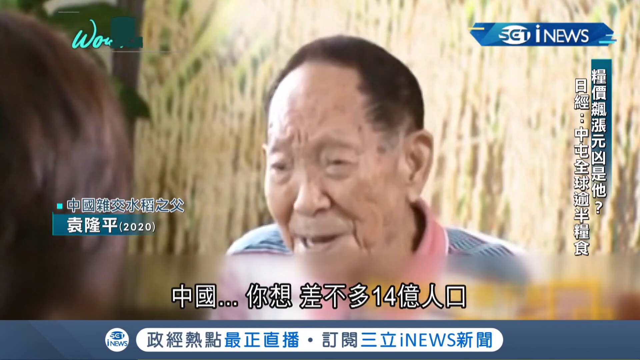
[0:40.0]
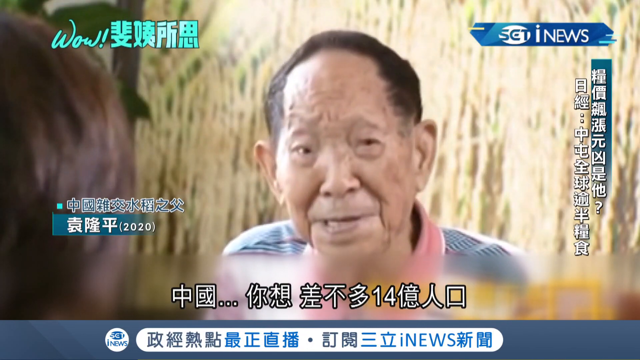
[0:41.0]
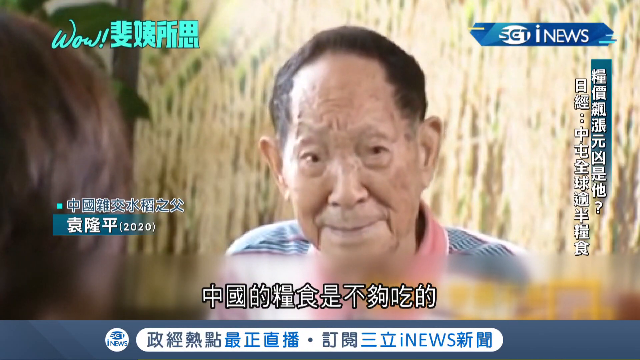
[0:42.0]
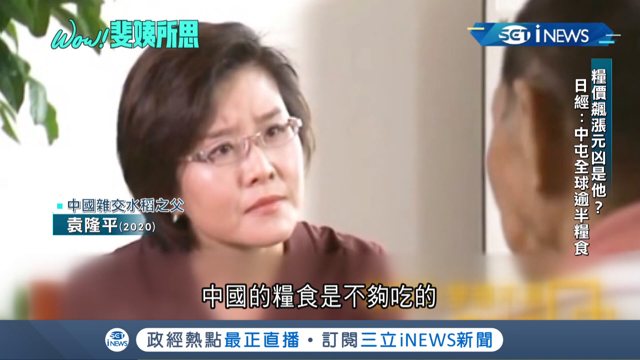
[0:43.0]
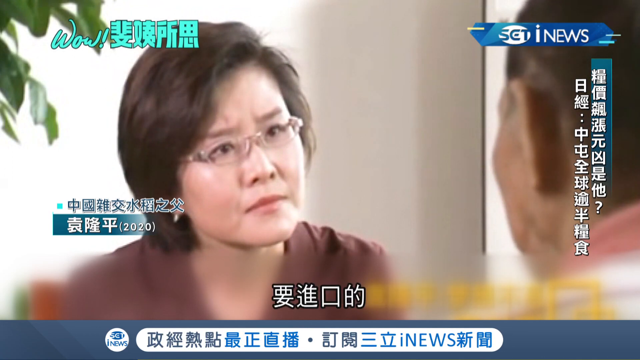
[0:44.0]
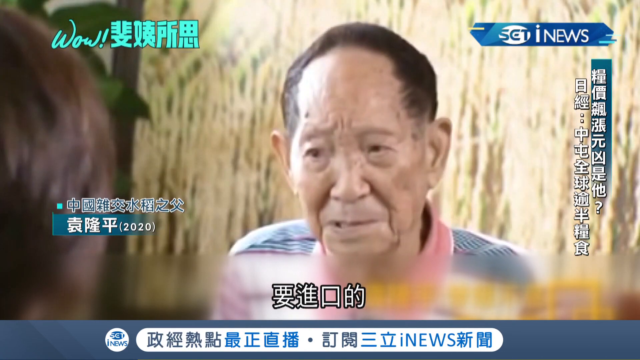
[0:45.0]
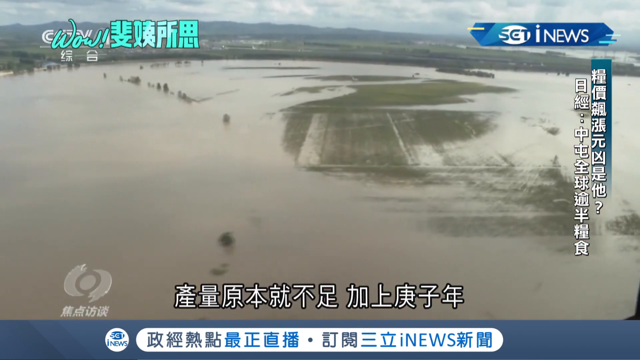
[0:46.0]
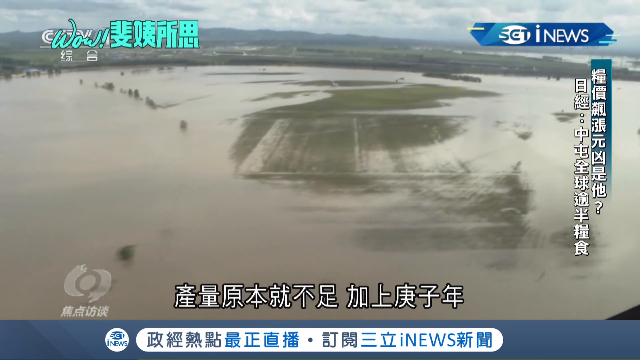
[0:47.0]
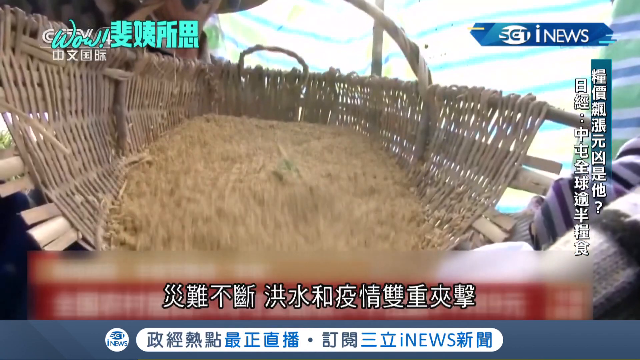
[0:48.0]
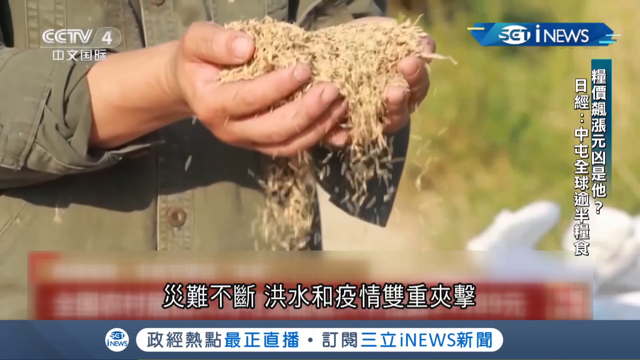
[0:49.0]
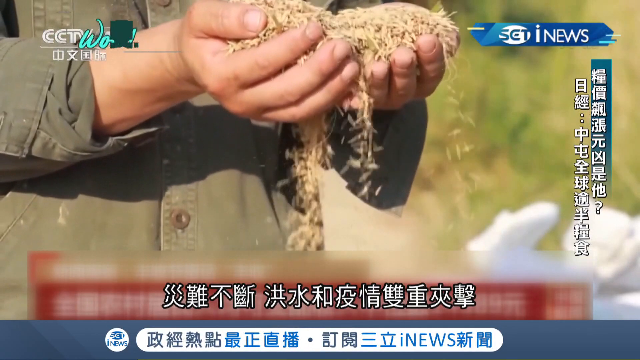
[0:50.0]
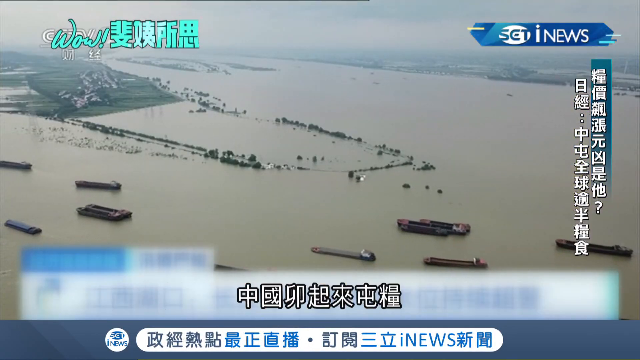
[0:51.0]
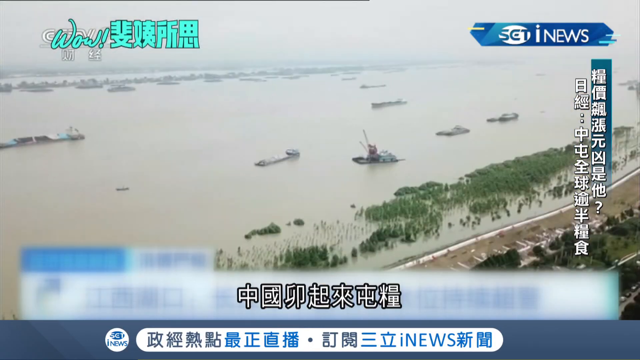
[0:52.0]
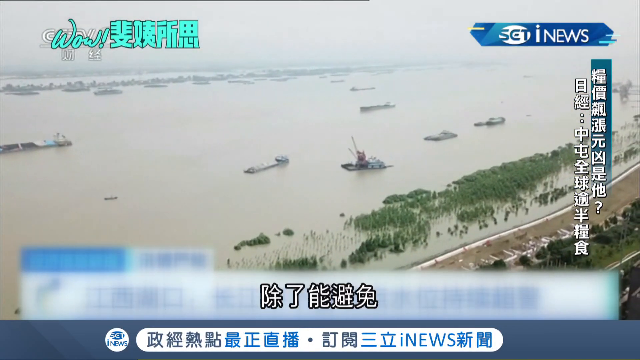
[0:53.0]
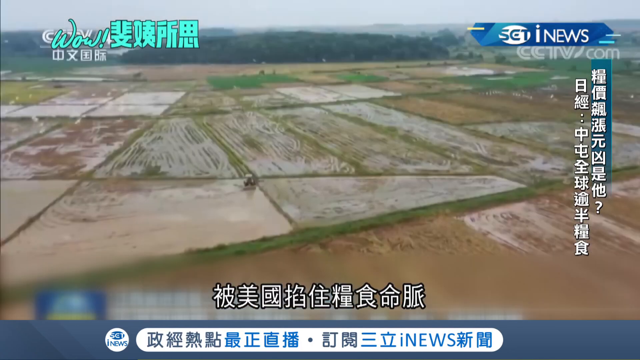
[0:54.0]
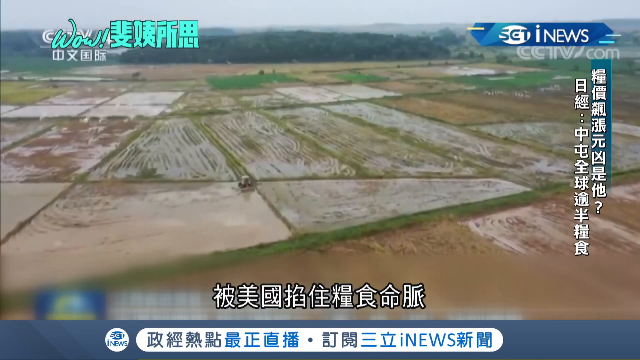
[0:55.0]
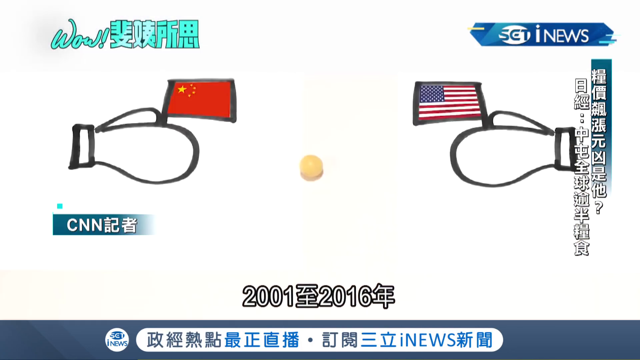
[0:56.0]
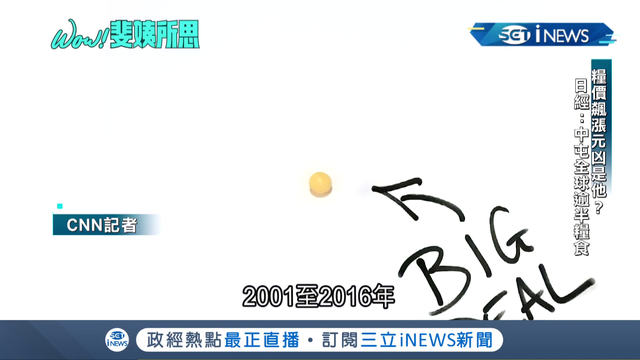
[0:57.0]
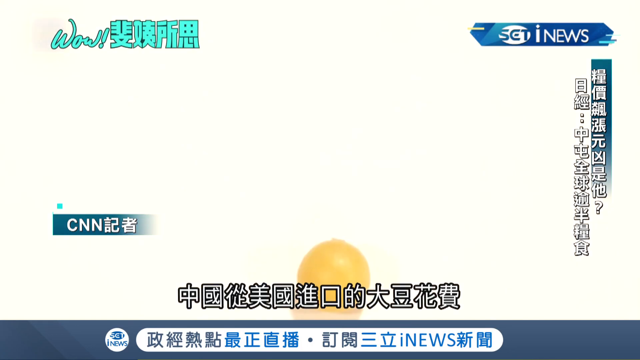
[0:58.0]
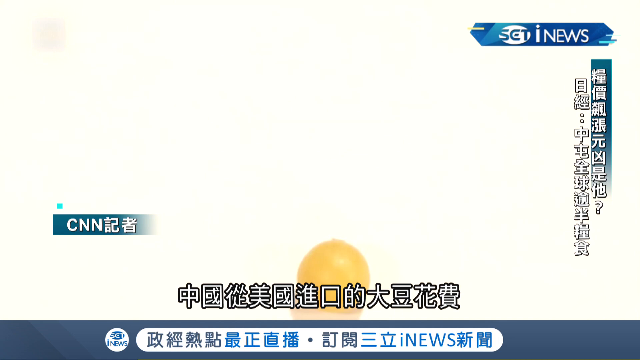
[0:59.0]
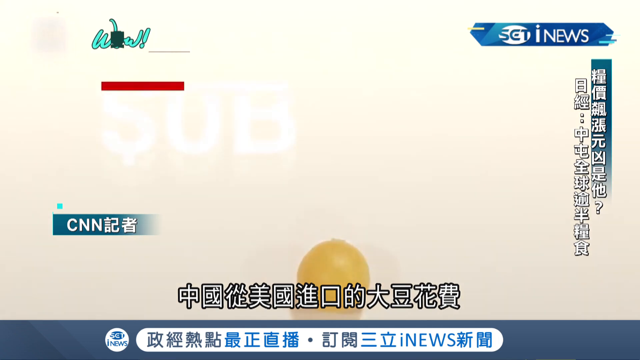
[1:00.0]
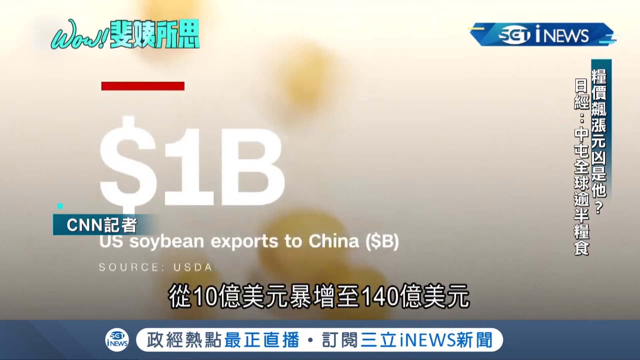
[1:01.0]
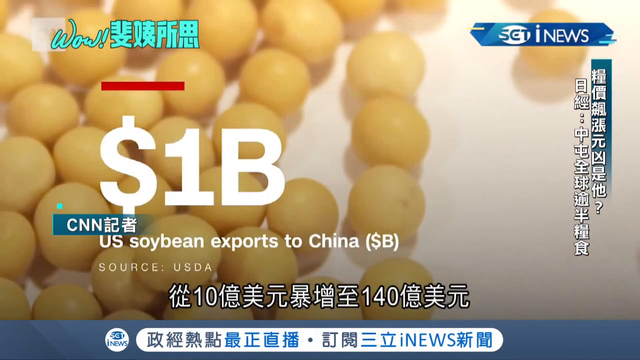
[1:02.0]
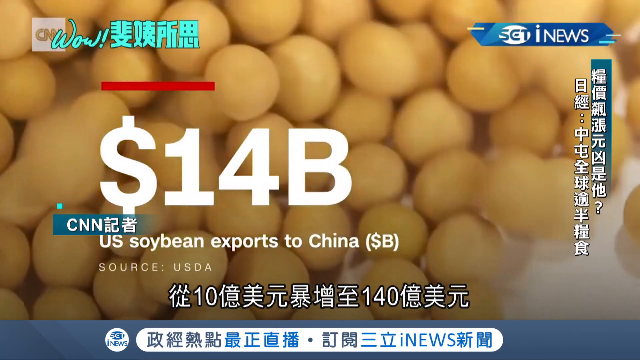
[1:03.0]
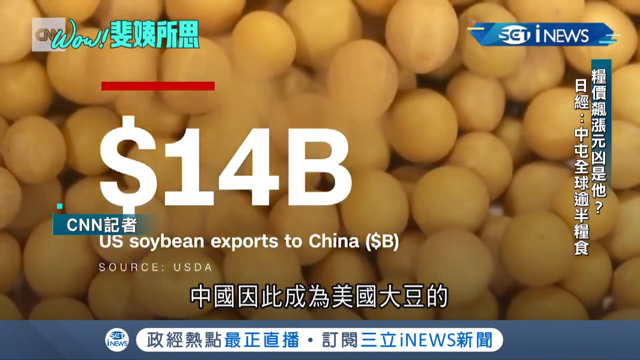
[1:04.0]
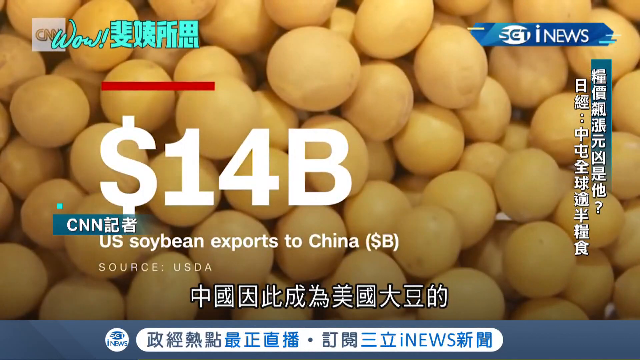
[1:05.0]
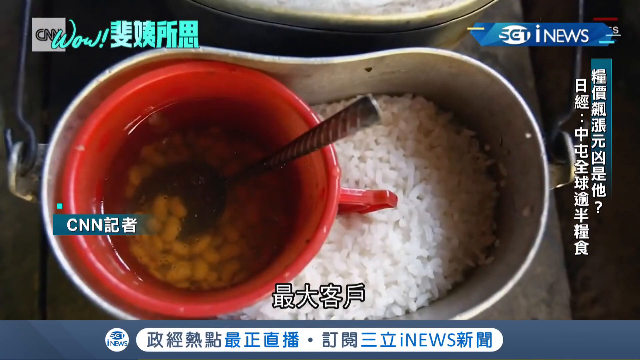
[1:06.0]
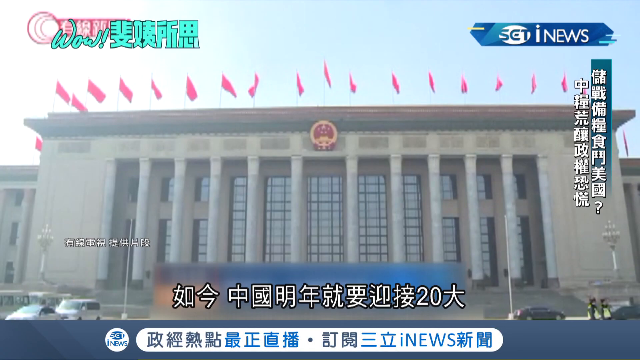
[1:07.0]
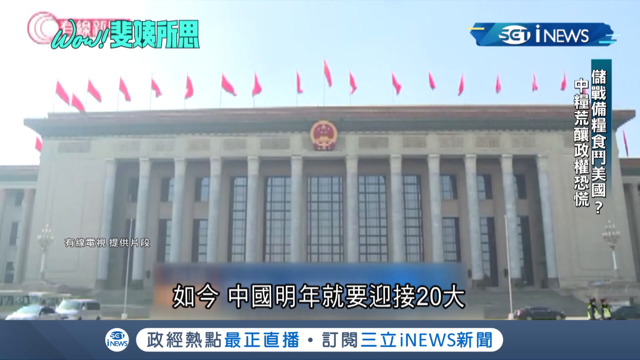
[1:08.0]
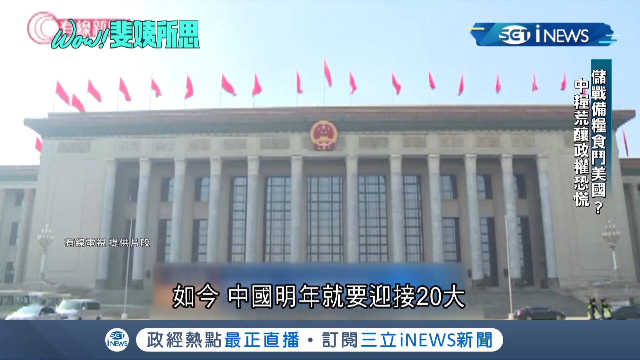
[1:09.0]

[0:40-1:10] A woman wearing glasses appears to be interviewing the elderly man, and she appears to be a news reporter. An aerial view then shows an area of land covered with a lot of water, looking like a big lake. Someone pours grains from a wicker basket, and then someone holds grains in both hands while the grains fall downward. A large lake or river full of boats appears, followed by an aerial view of a large farmland. A drawing shows what looks like two boxing gloves: the glove on the left holds a Chinese flag and the glove on the right holds an American flag. Text on the left reads "14 billion U.S. soybean exports to China." Then some food appears: white rice and what looks like a bowl of soup.